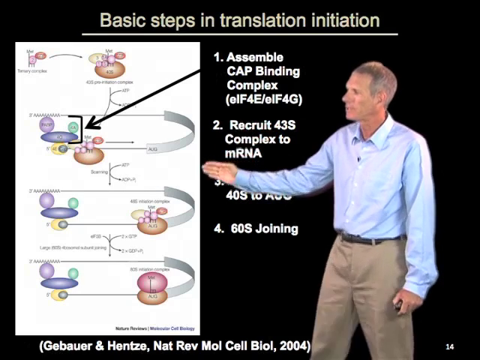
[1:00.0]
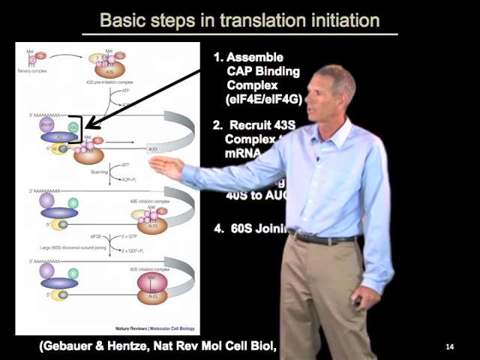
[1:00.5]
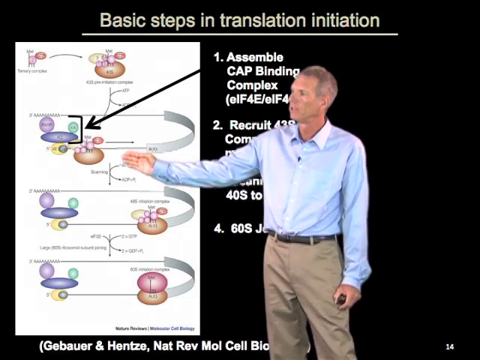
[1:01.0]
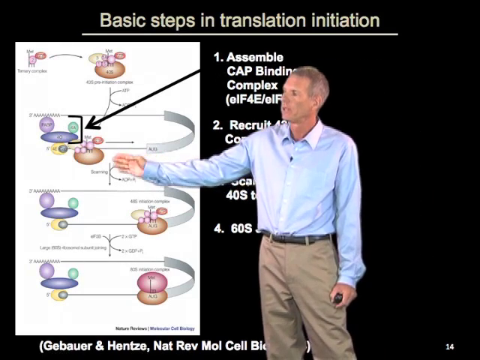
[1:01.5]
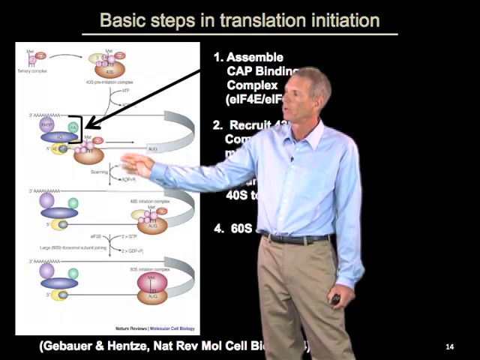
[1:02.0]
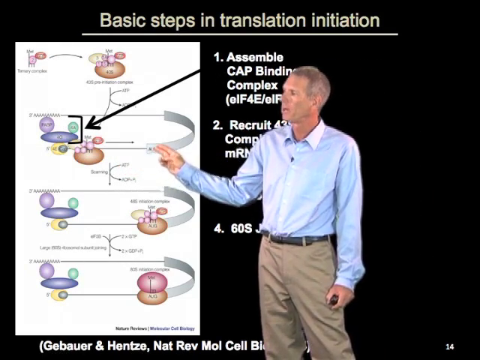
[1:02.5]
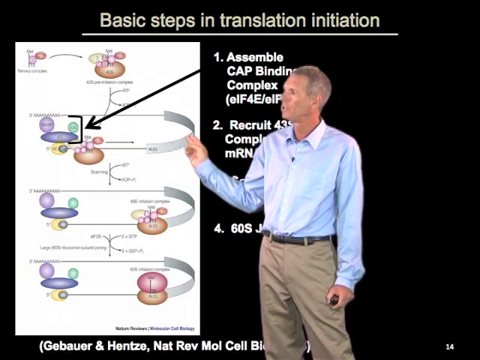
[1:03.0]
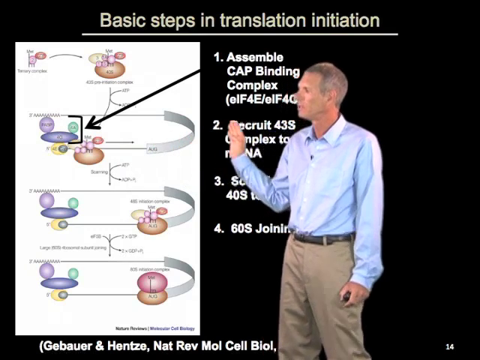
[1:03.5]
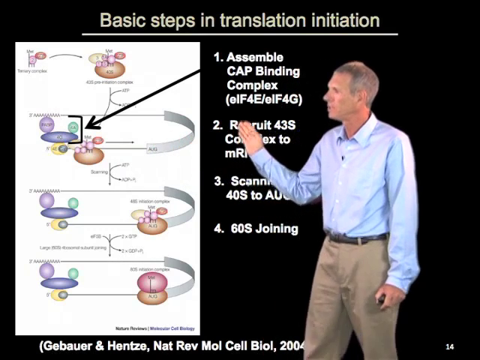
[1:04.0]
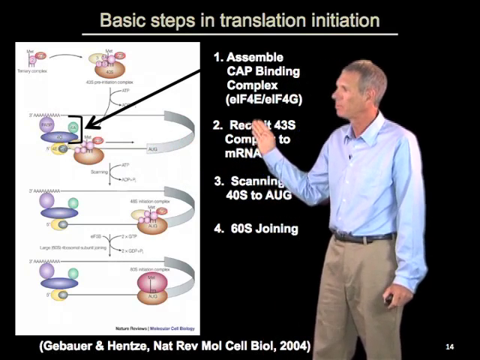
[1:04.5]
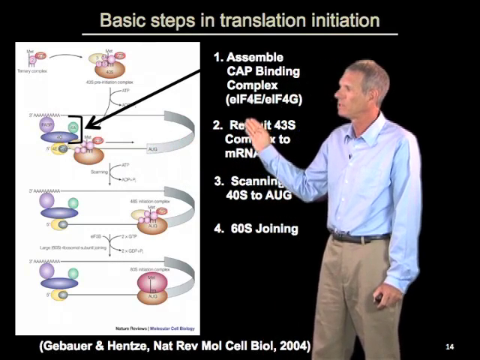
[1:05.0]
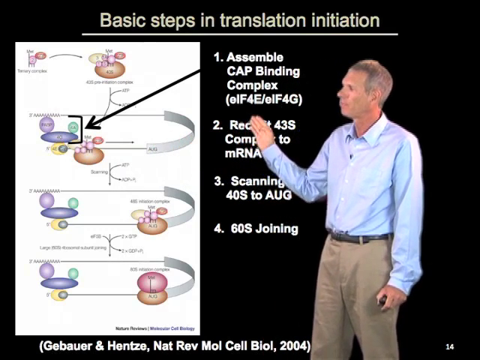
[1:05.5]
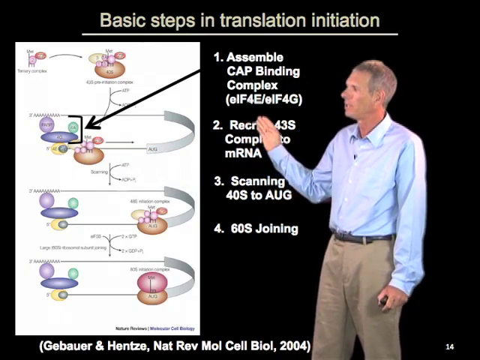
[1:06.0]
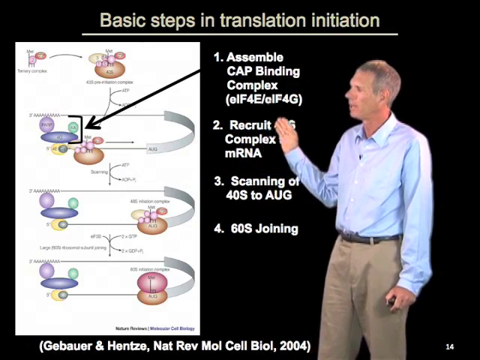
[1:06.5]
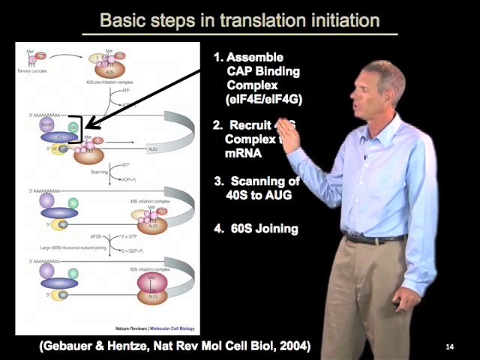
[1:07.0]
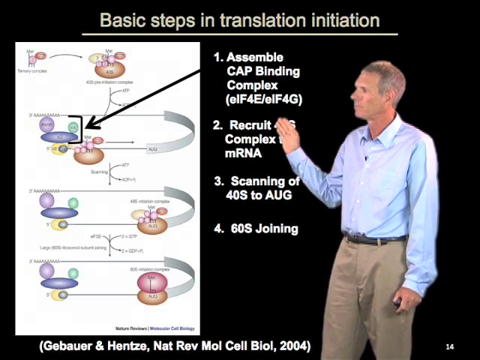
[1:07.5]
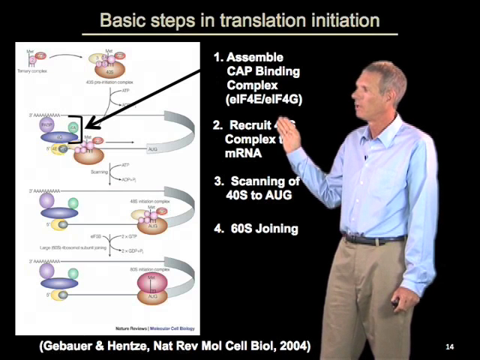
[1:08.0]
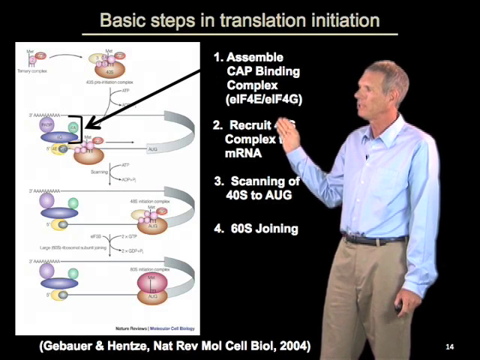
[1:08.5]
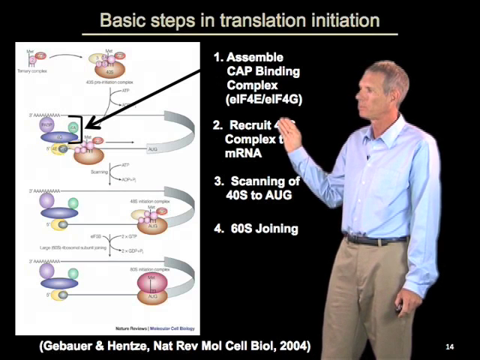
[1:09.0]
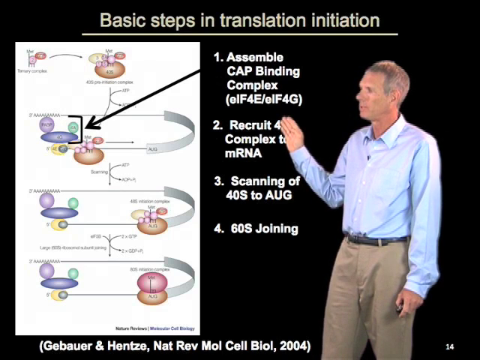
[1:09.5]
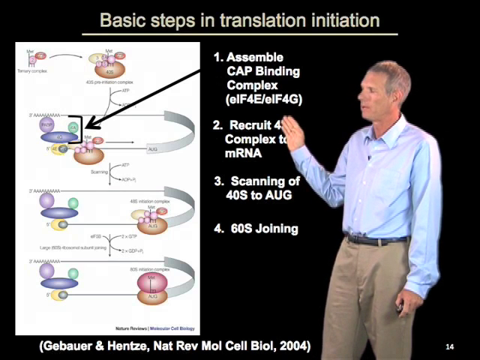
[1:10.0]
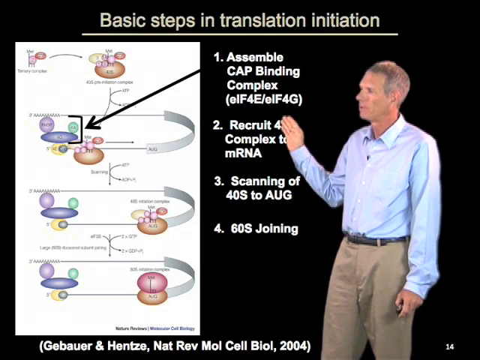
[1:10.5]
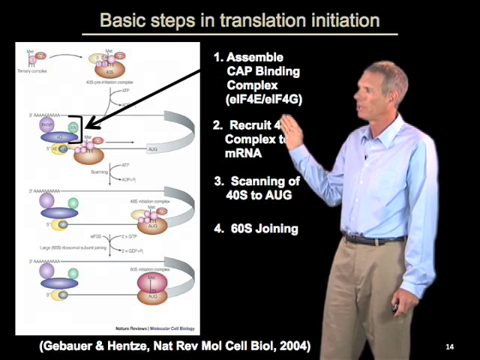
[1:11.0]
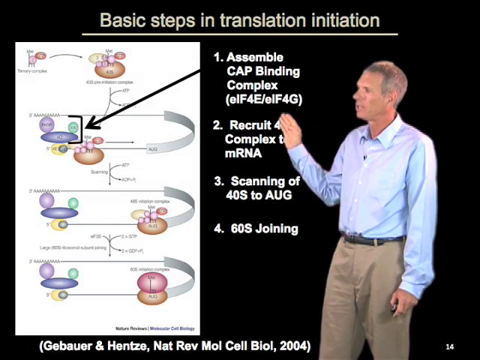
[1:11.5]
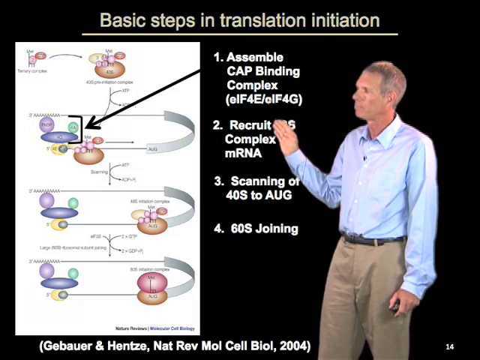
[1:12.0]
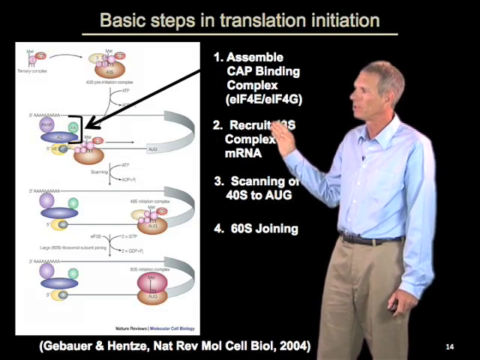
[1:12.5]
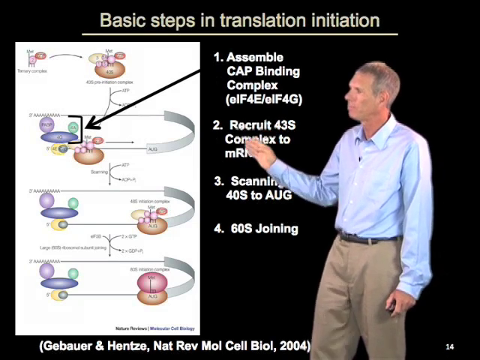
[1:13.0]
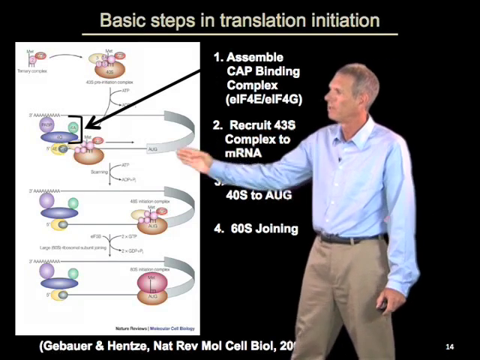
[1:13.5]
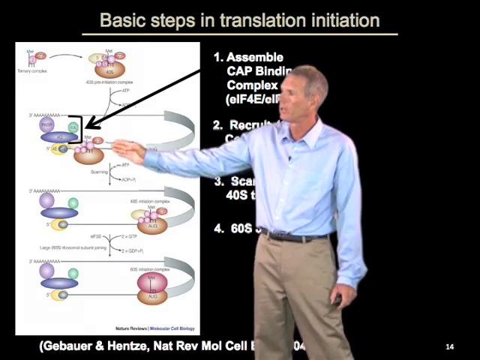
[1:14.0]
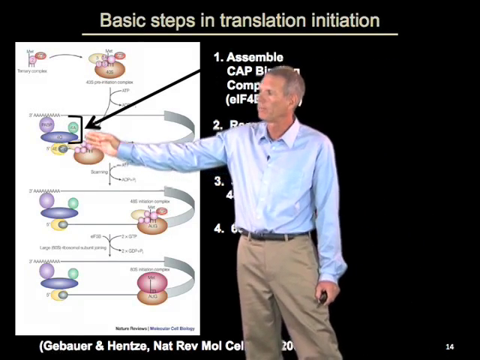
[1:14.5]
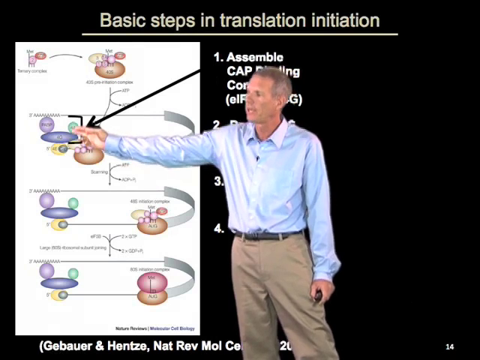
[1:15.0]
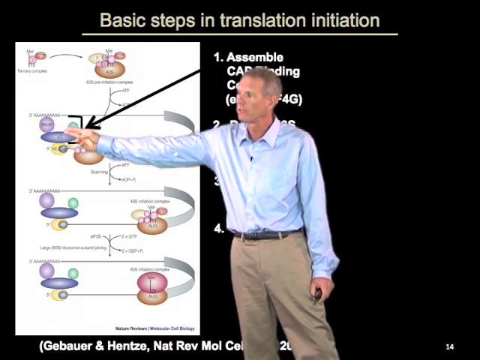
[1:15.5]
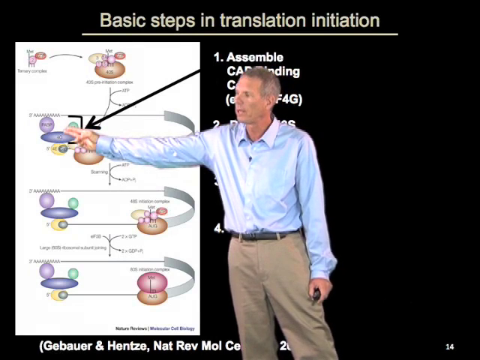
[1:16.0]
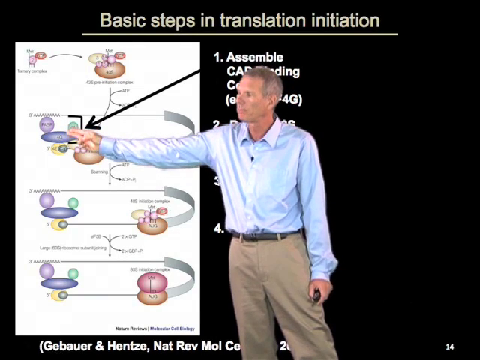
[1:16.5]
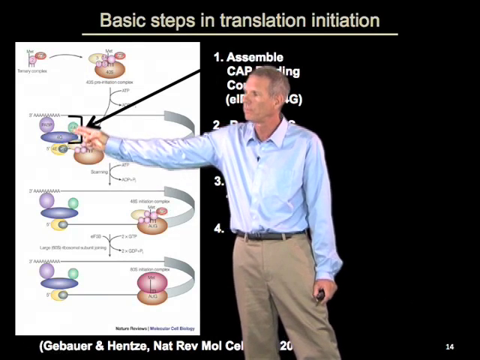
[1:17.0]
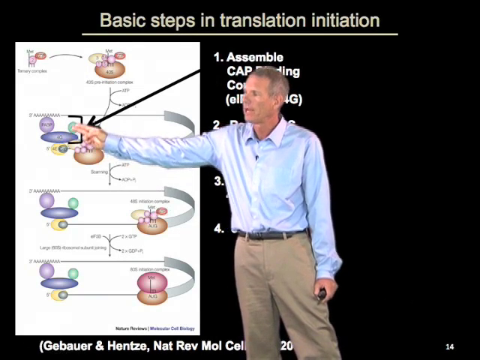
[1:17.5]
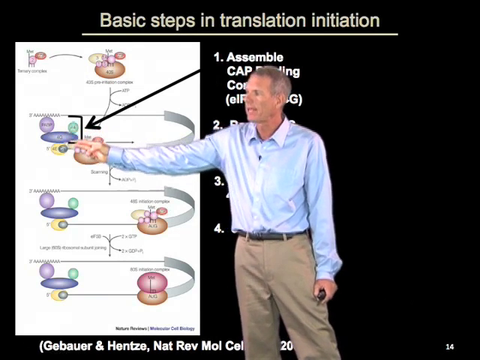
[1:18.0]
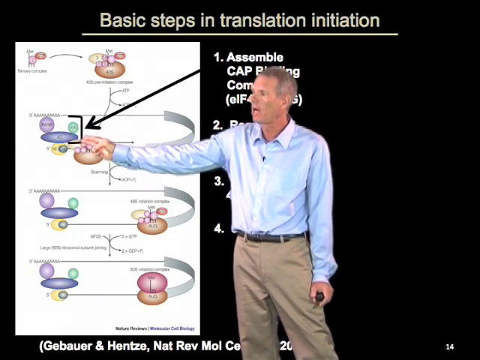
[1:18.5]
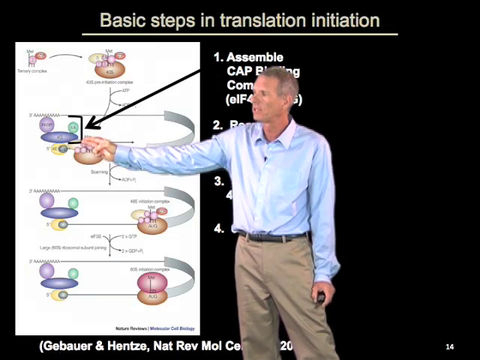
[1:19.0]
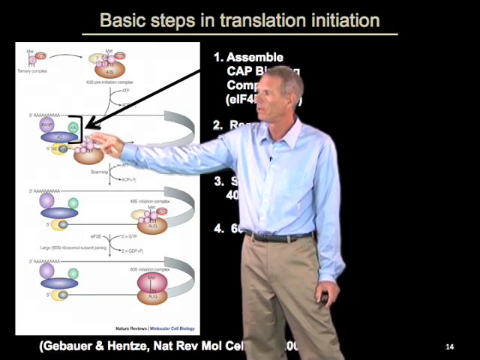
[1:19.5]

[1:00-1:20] The man goes through the chart of basic steps in translation initiation, which has four steps. He wears khaki pants and a long blue-sleeved shirt and appears to be on step two. The chart runs up and down, with step one at the top and step four at the bottom. It says "basic steps," with "assemble cap binding complex," "recruit 43S complex to mRNA," "scanning 40S to AUG," and, as step four, "60S joining."